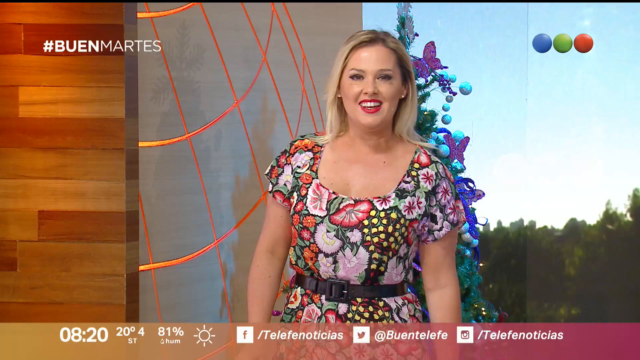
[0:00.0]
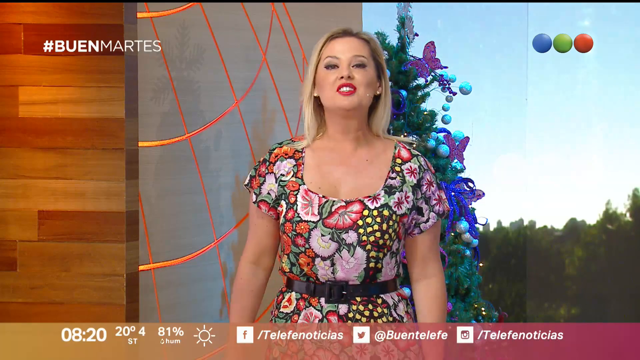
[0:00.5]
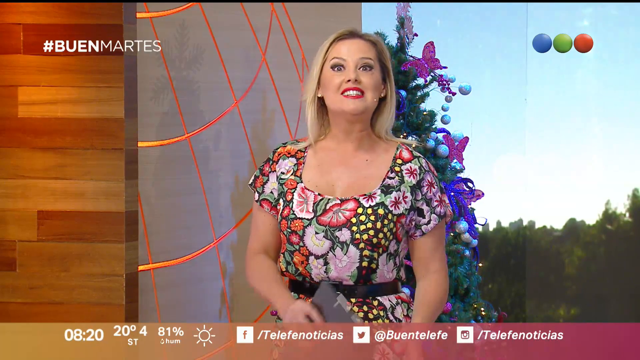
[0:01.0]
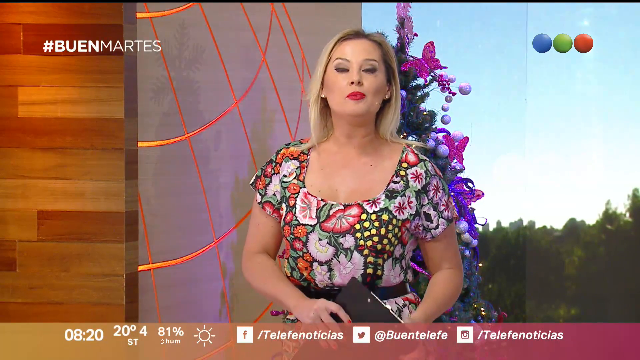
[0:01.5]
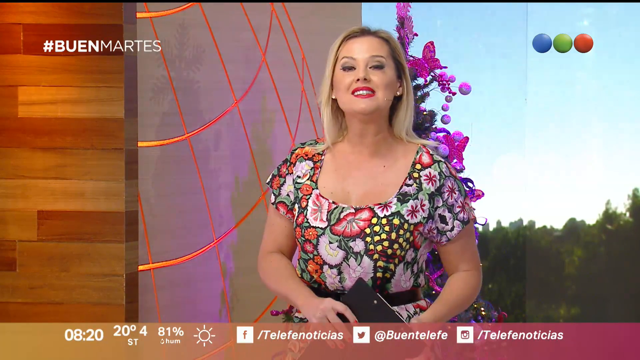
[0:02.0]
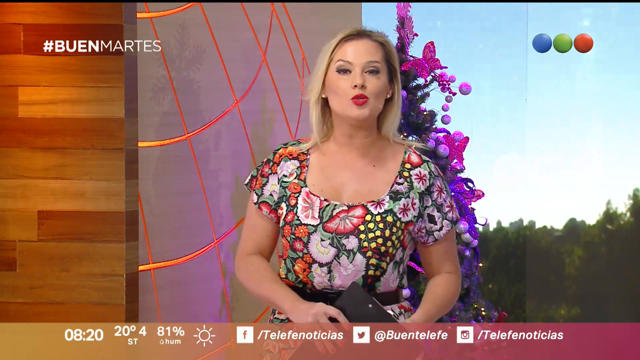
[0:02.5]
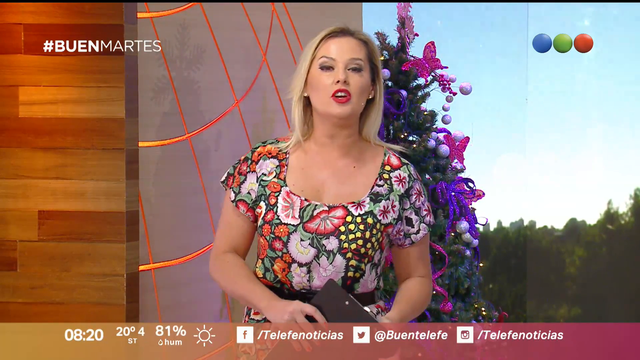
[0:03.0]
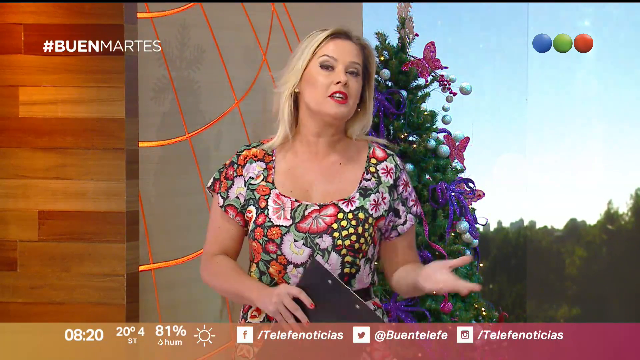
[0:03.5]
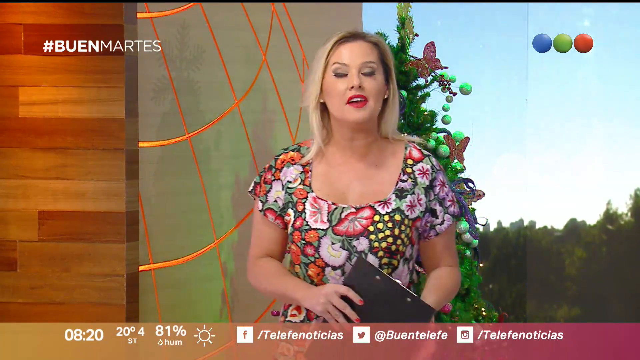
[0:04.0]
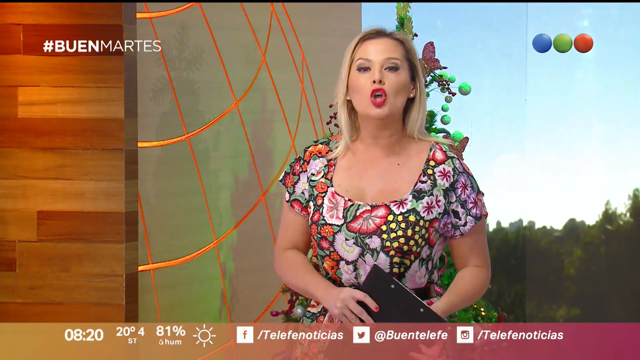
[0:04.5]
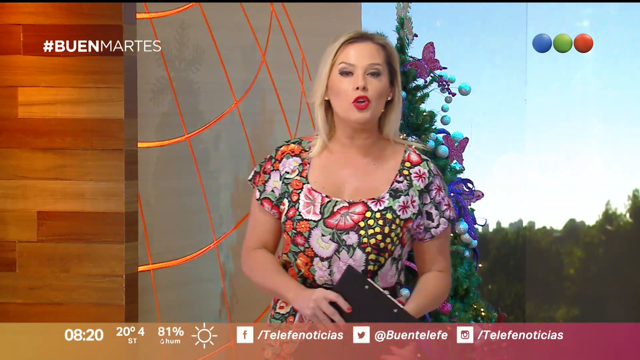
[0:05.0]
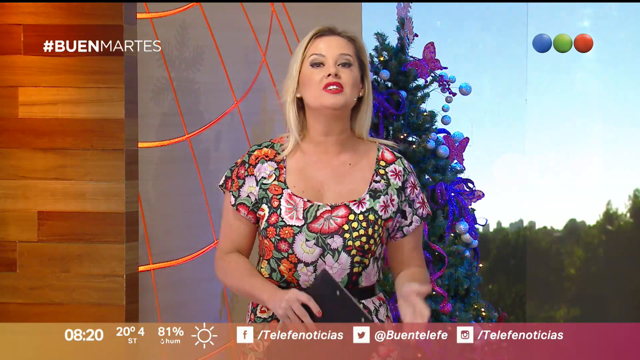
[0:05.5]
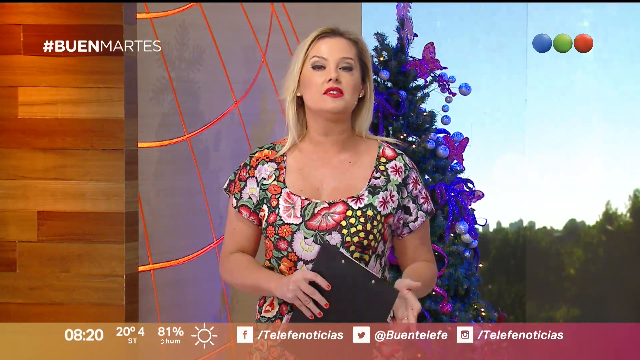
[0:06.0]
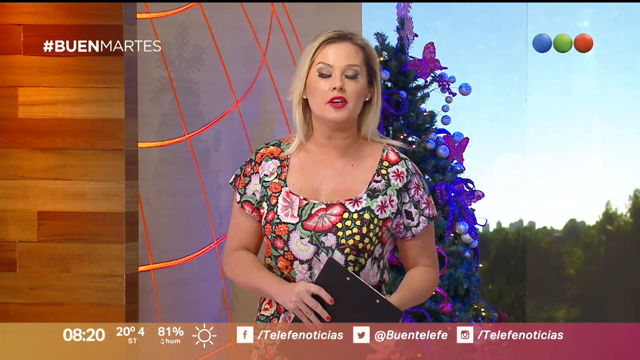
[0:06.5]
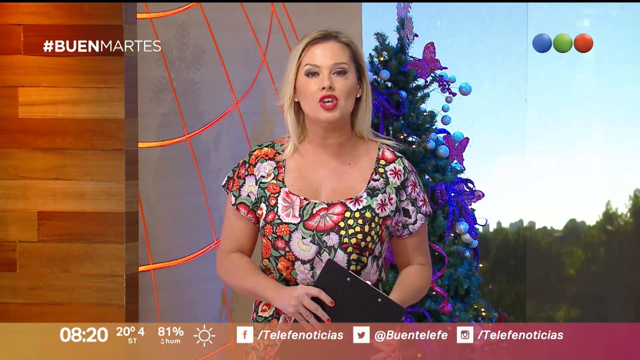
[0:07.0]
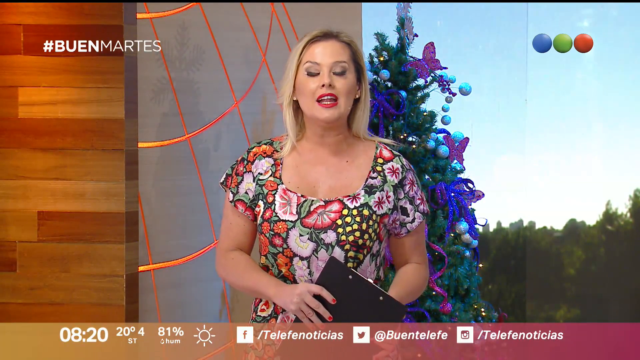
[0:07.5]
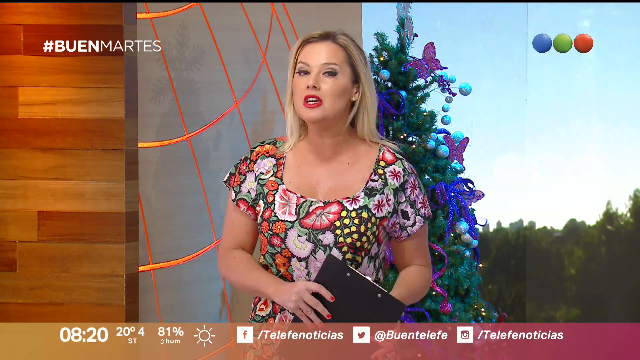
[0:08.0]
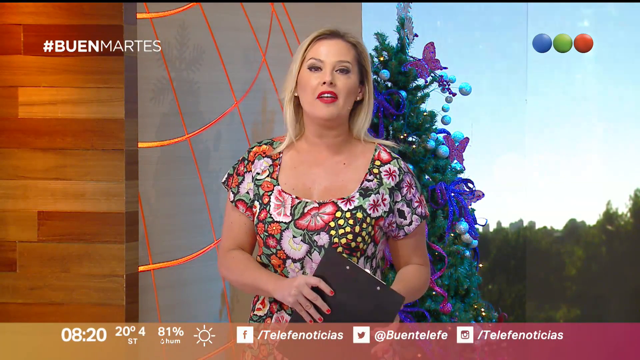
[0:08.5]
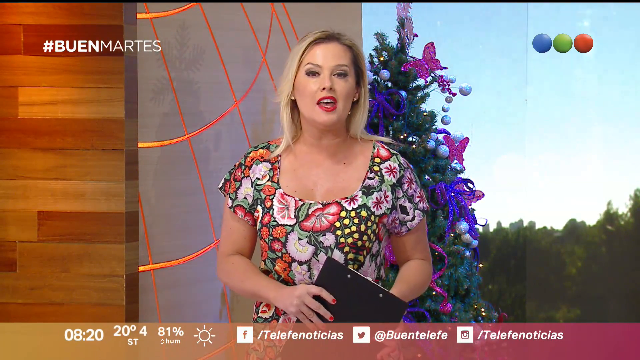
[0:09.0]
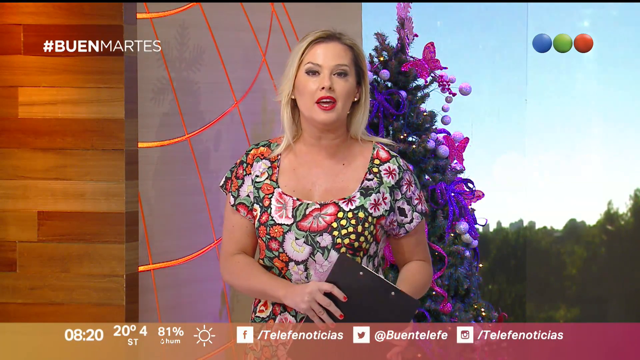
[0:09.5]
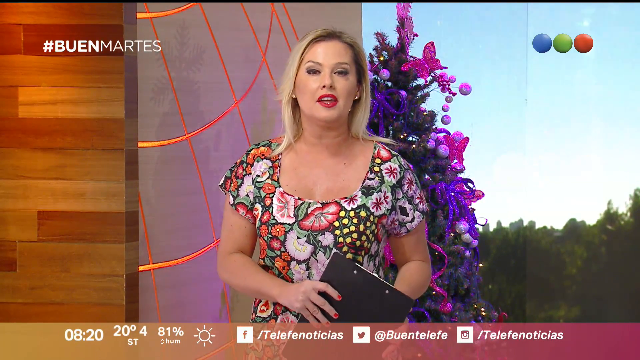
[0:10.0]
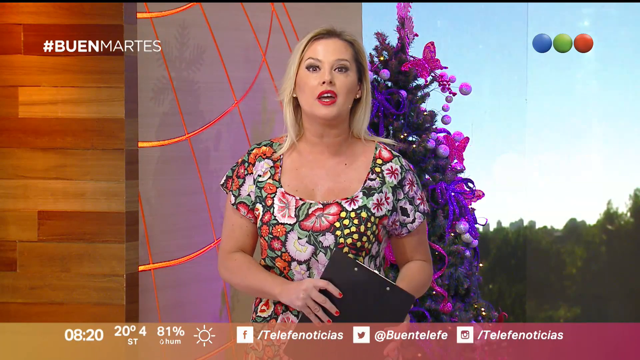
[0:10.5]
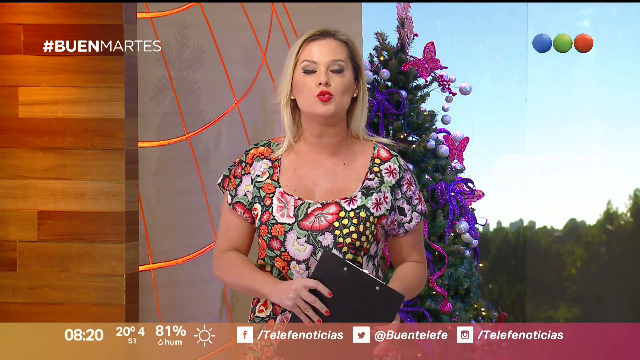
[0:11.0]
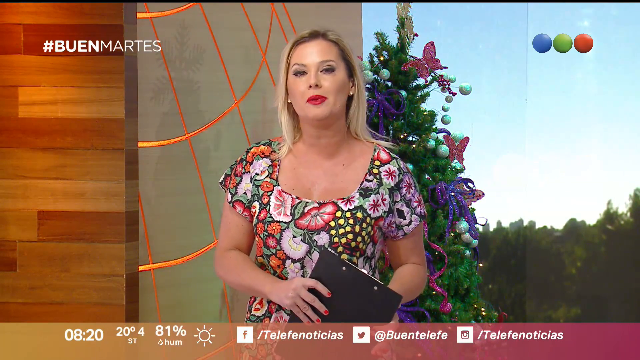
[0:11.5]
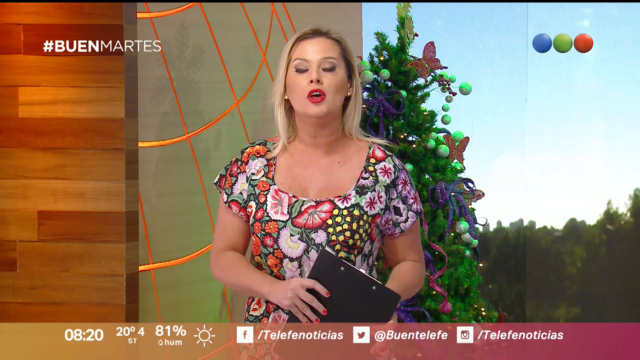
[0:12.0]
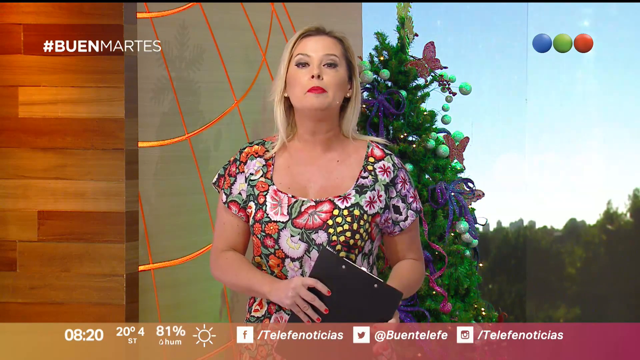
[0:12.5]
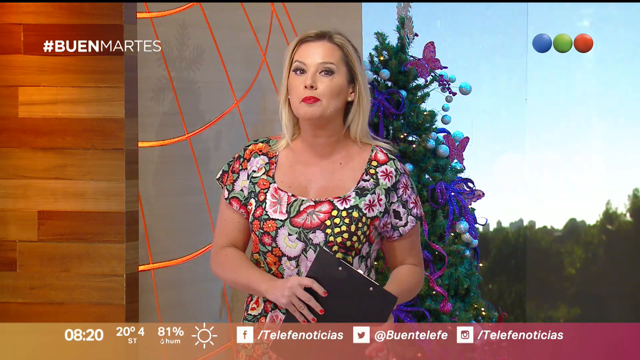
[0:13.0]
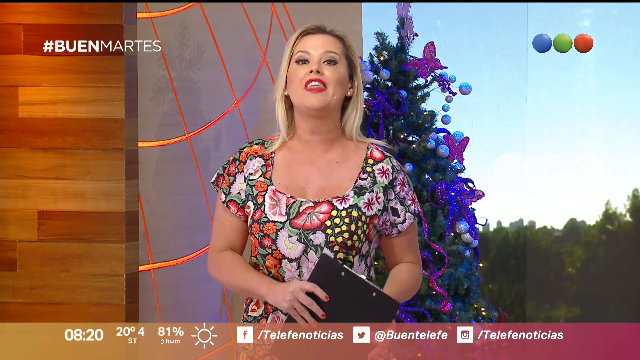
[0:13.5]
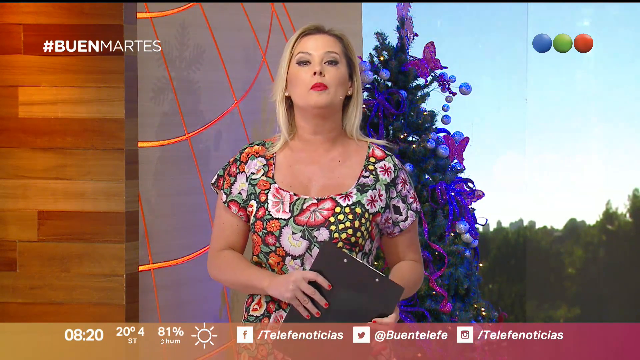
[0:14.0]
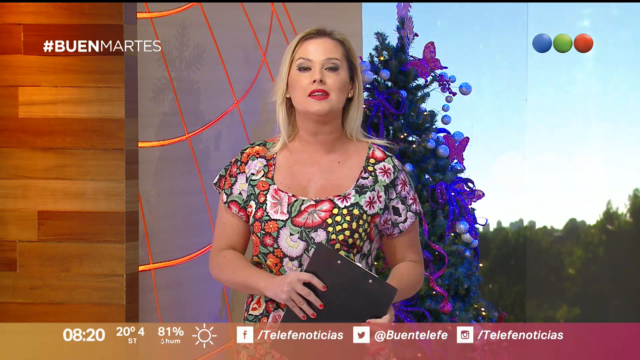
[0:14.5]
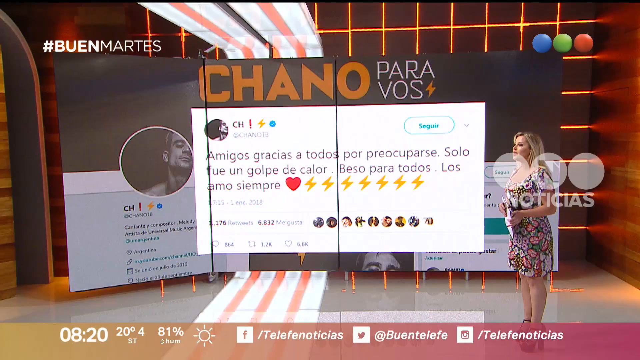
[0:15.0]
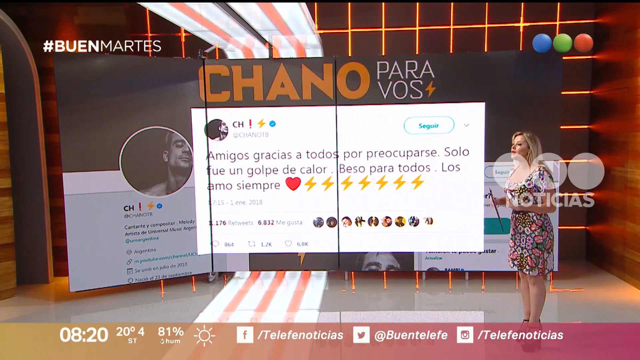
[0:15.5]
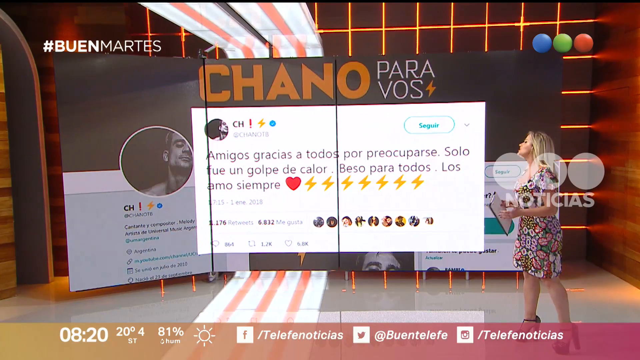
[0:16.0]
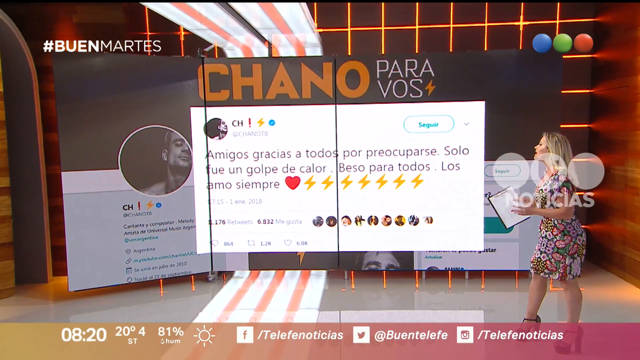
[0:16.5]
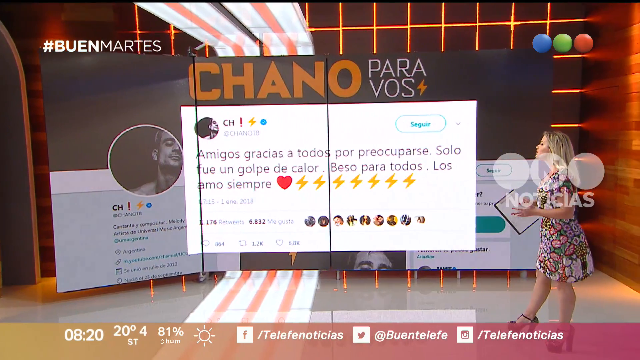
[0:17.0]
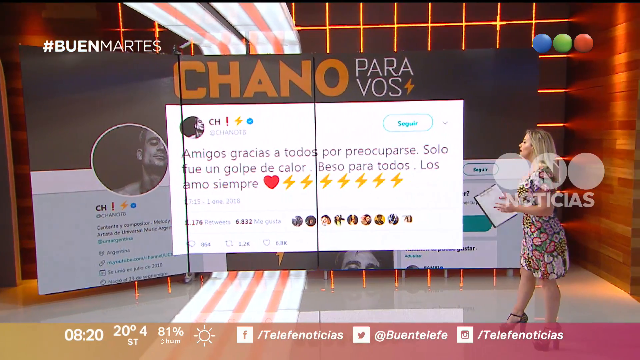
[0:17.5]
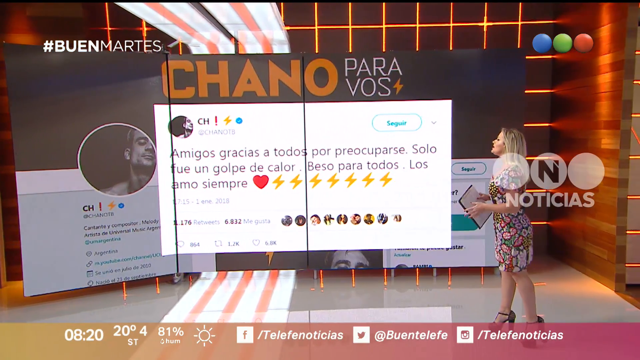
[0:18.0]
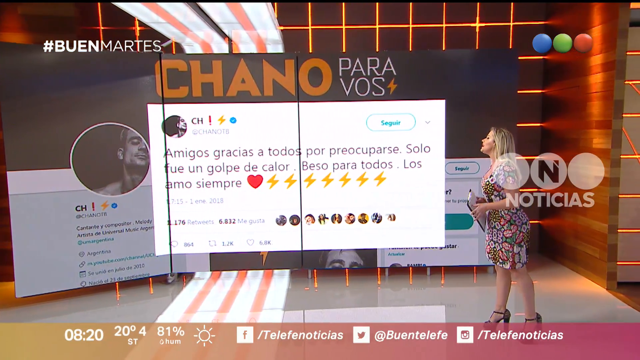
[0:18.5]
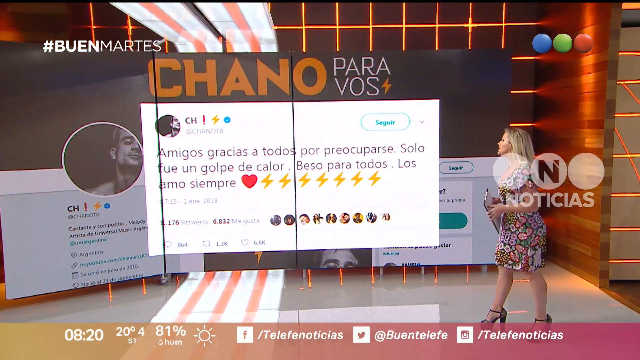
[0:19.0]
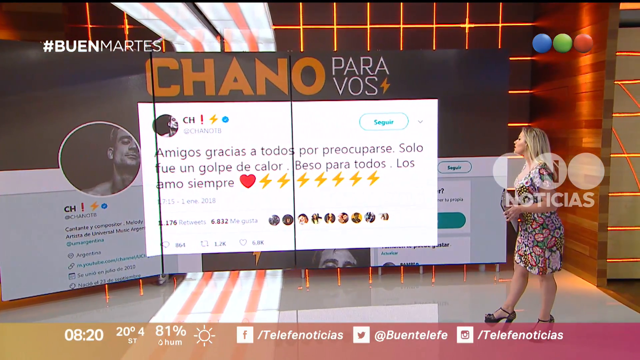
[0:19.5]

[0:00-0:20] A news reporter stands in a studio whose background appears to be roughly half of a grid-like globe. Over her left shoulder, behind her, is a Christmas tree decorated with purple and pink butterflies and purple and pink tinsel and balls. She wears a very flowery dress and has shoulder-length blonde hair, pearl earrings, blue eye shadow and red lipstick. She holds a clipboard in her right hand. "#Buen Martes" appears in the top left corner of the screen. Along the bottom are the time, 820, the temperature, 20 degrees Fahrenheit, the humidity, 81%, a sun logo, and Facebook, Twitter and Instagram links. She talks to the camera as if delivering the news or a weather report, and then holds the clipboard with both hands; her nails are painted red. A tweet in Spanish is shown on a screen behind her.